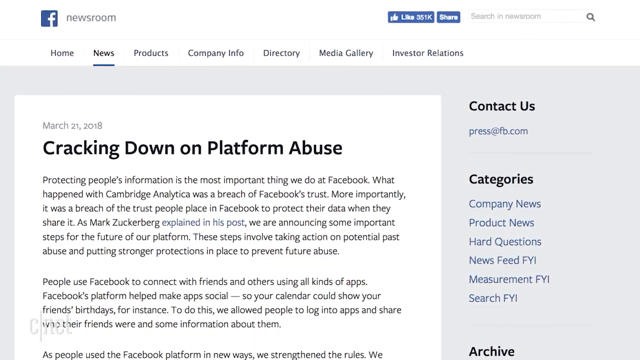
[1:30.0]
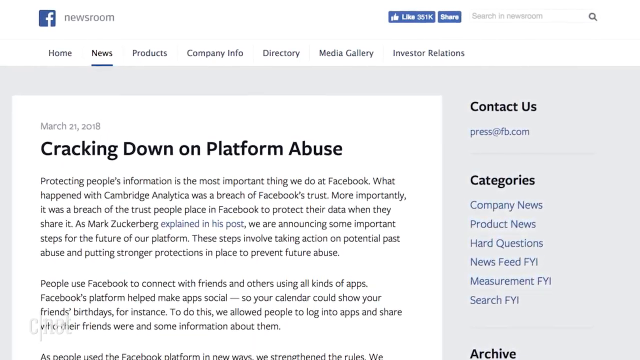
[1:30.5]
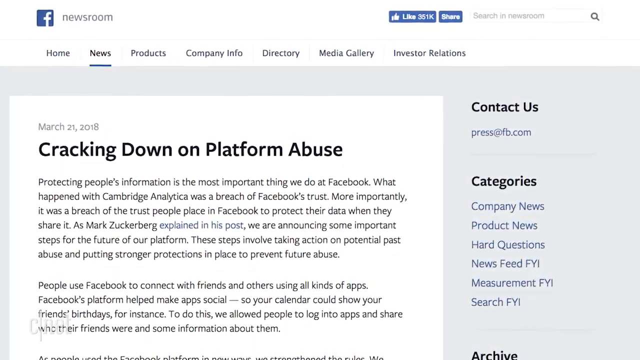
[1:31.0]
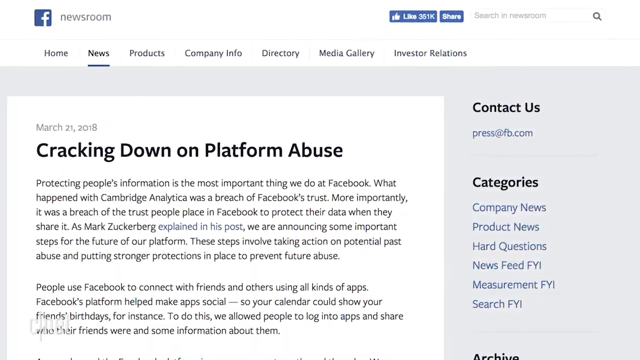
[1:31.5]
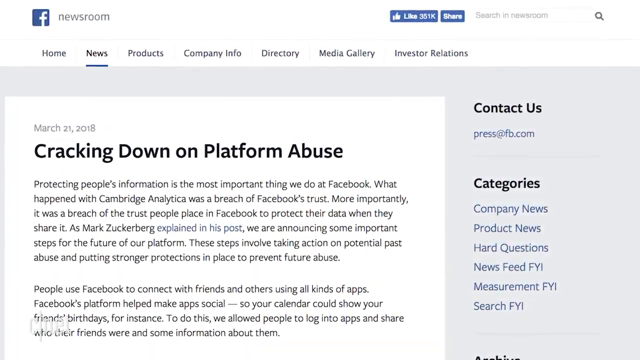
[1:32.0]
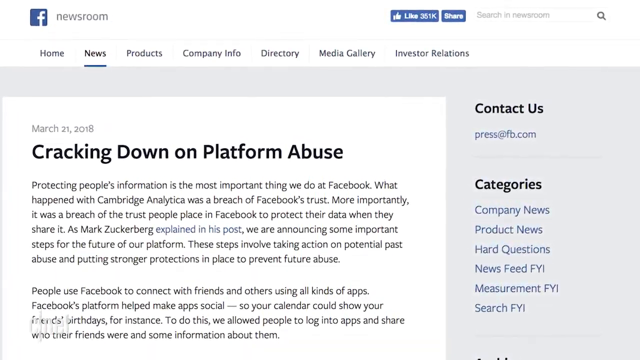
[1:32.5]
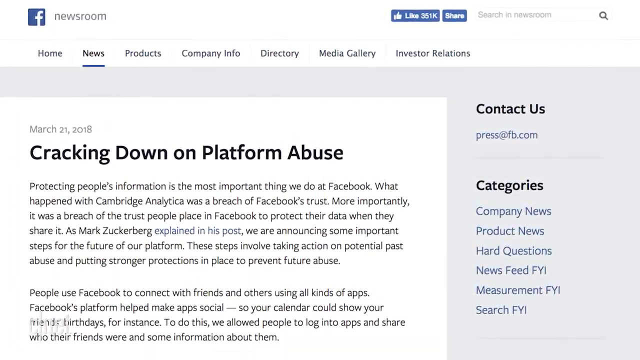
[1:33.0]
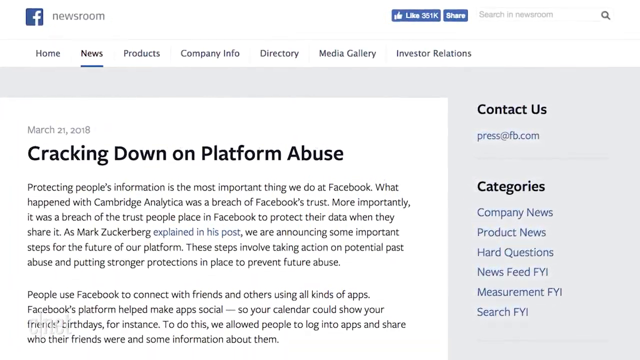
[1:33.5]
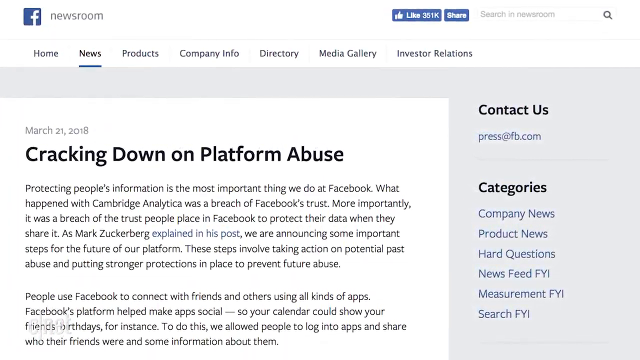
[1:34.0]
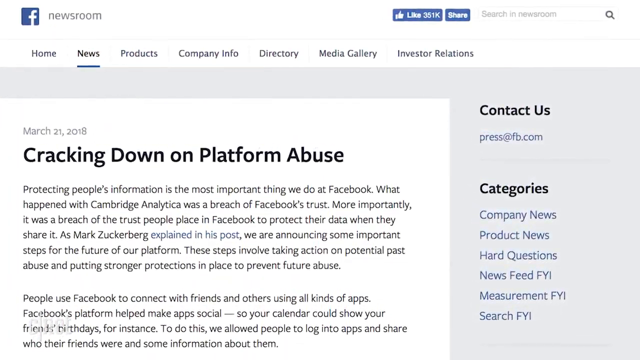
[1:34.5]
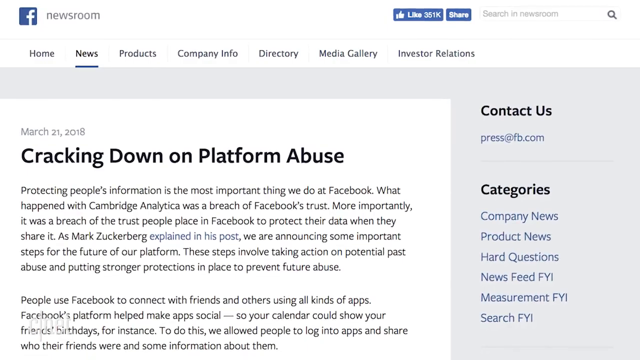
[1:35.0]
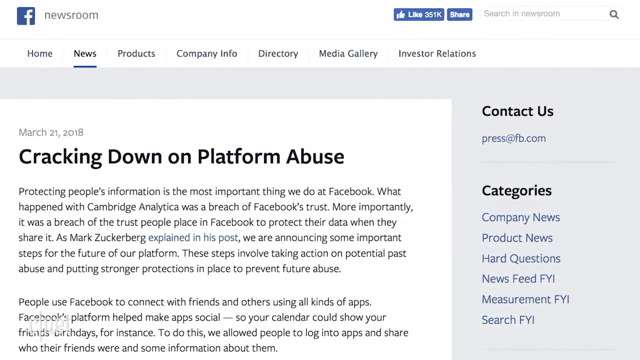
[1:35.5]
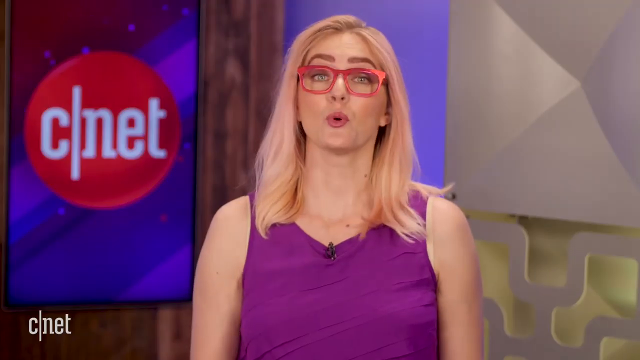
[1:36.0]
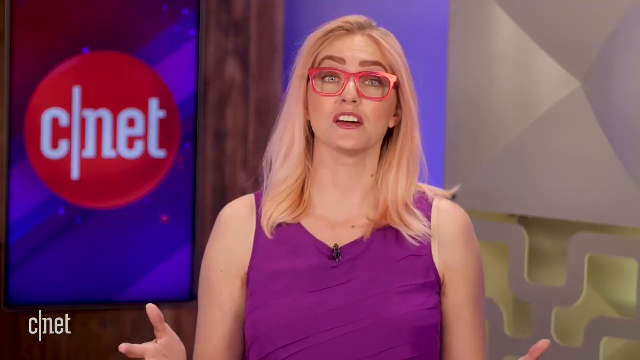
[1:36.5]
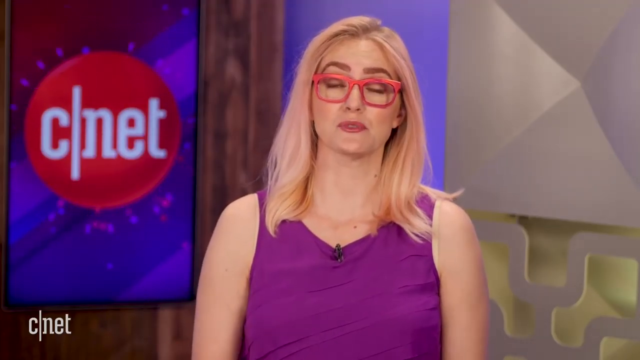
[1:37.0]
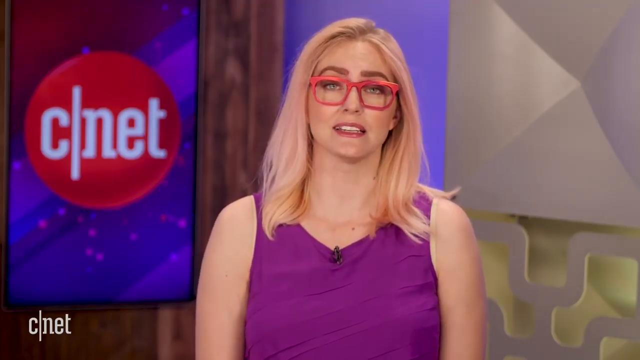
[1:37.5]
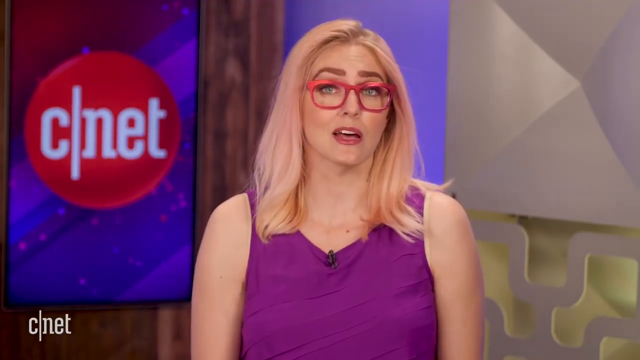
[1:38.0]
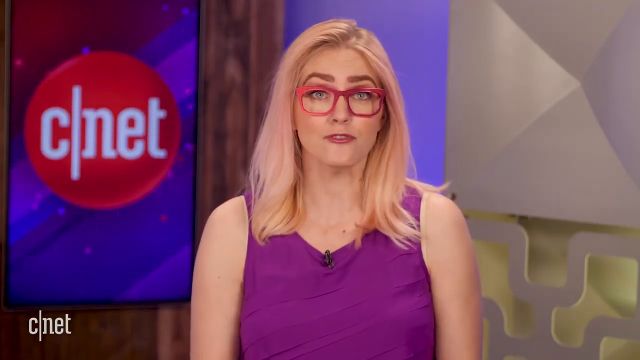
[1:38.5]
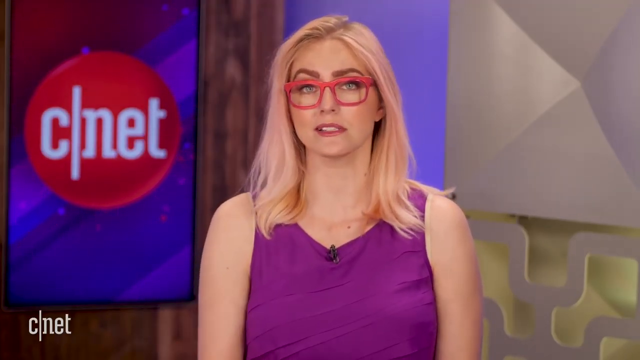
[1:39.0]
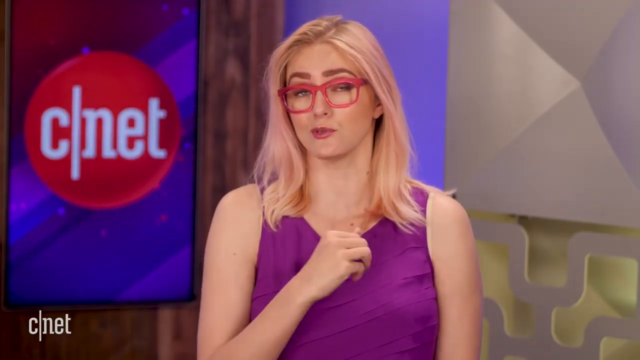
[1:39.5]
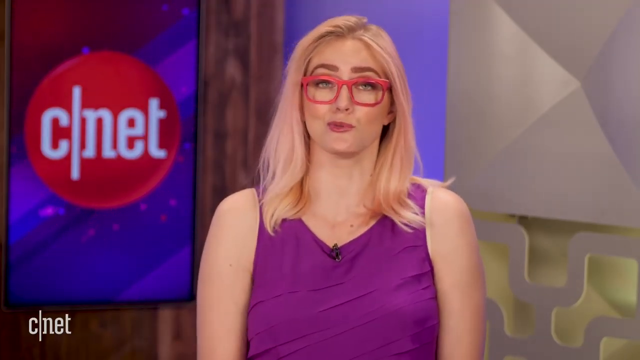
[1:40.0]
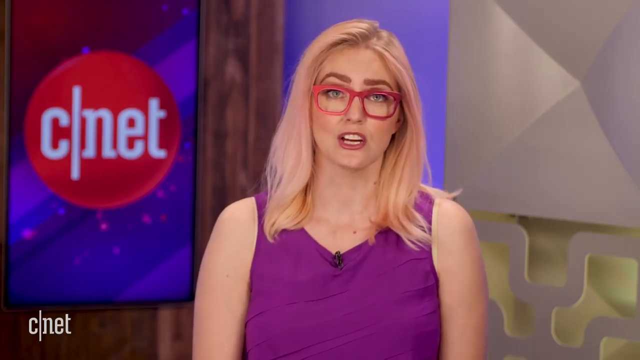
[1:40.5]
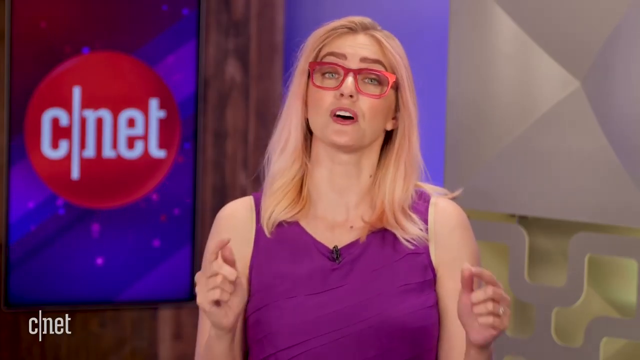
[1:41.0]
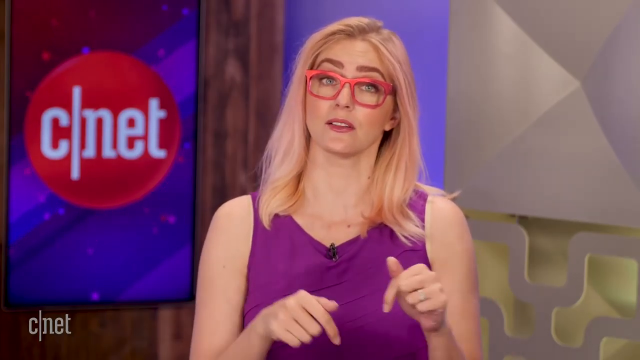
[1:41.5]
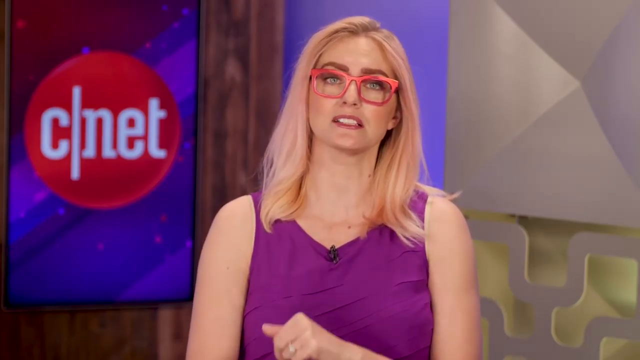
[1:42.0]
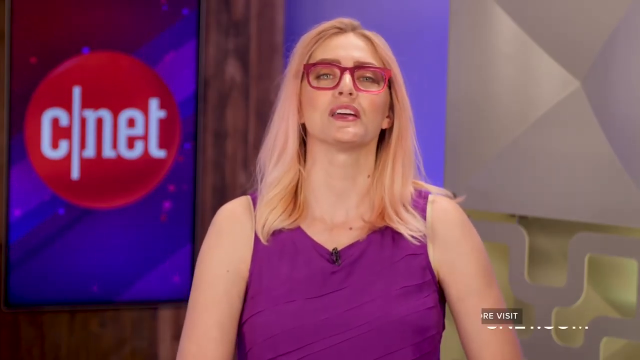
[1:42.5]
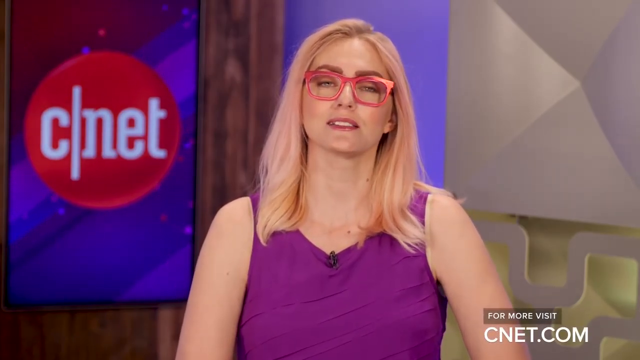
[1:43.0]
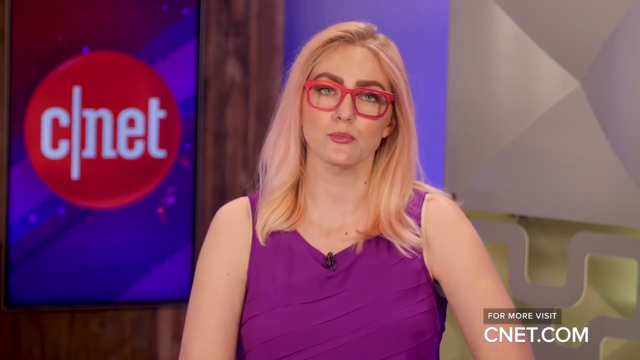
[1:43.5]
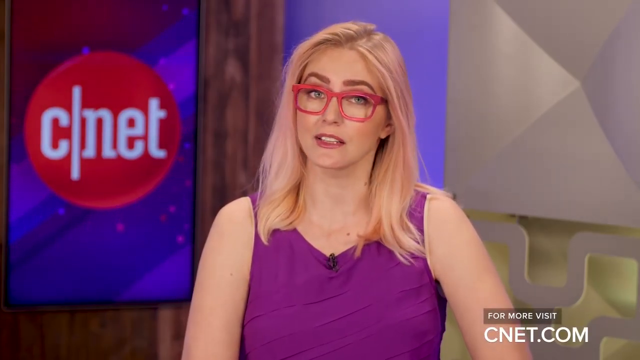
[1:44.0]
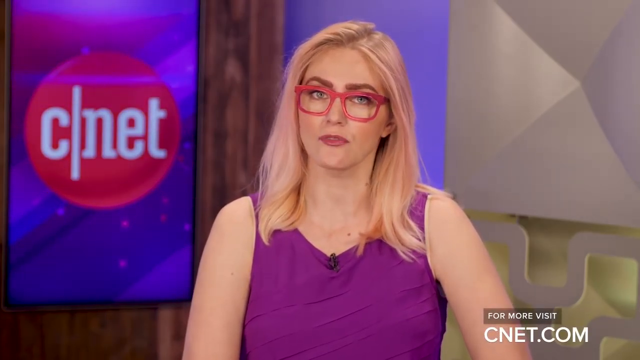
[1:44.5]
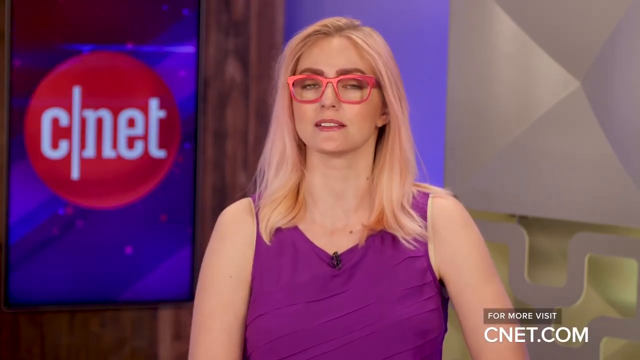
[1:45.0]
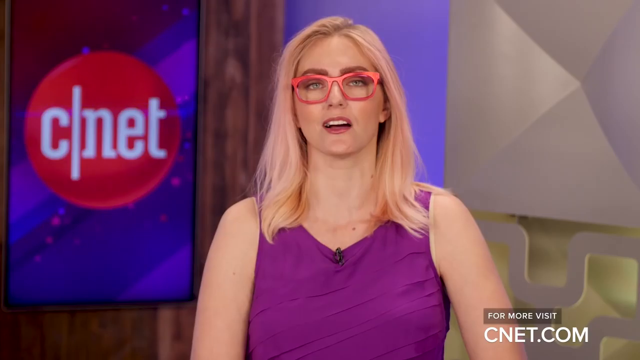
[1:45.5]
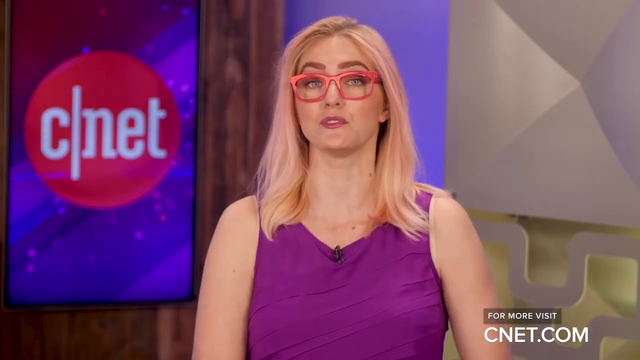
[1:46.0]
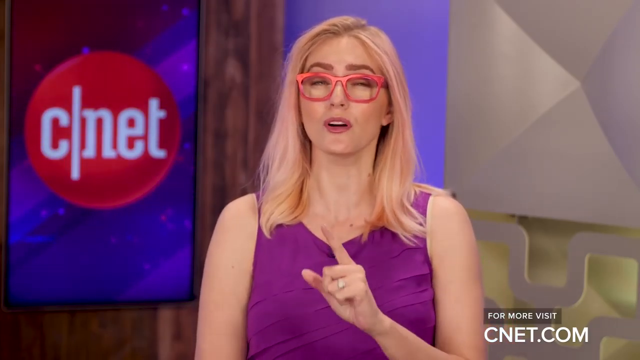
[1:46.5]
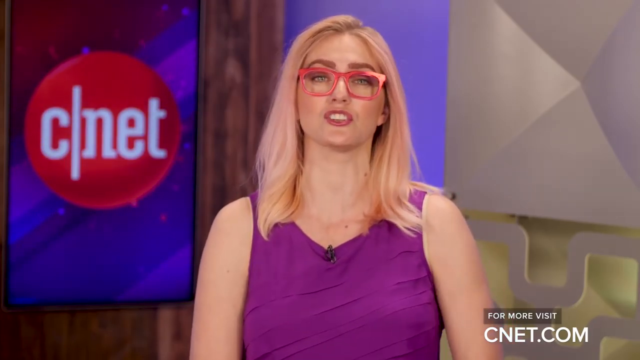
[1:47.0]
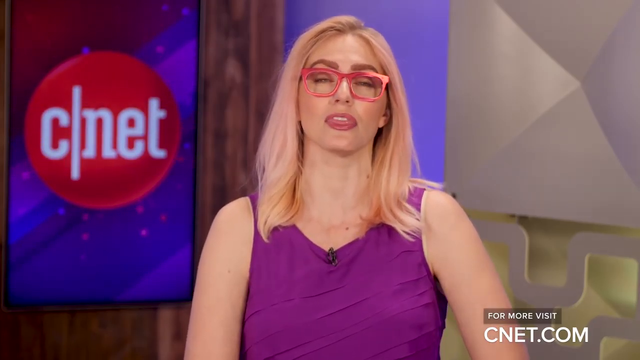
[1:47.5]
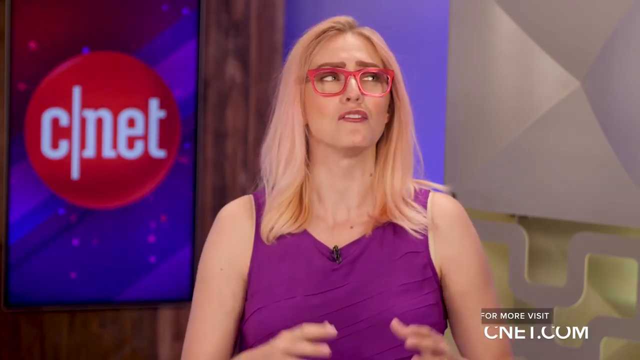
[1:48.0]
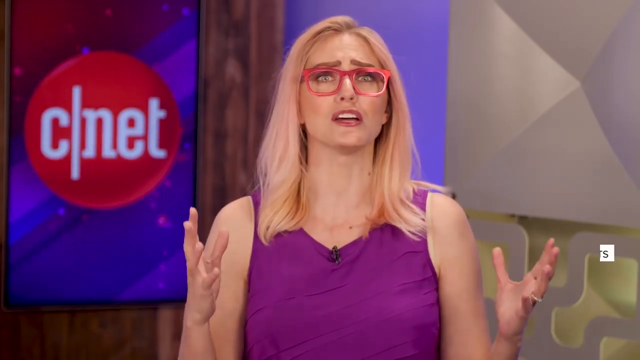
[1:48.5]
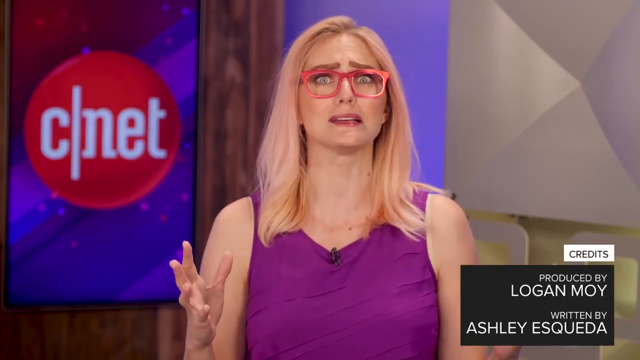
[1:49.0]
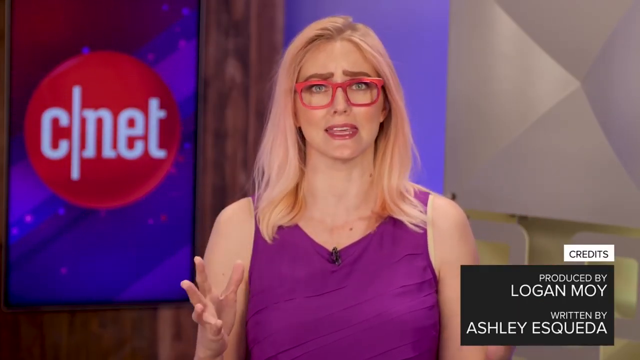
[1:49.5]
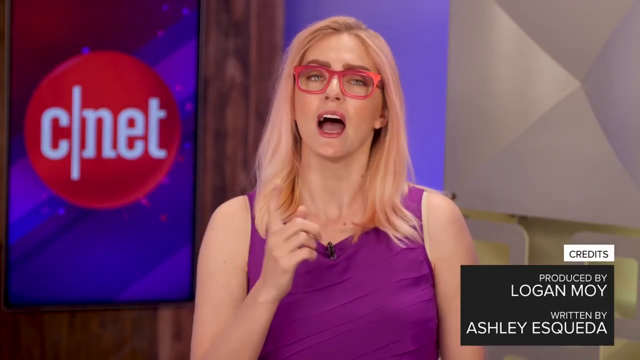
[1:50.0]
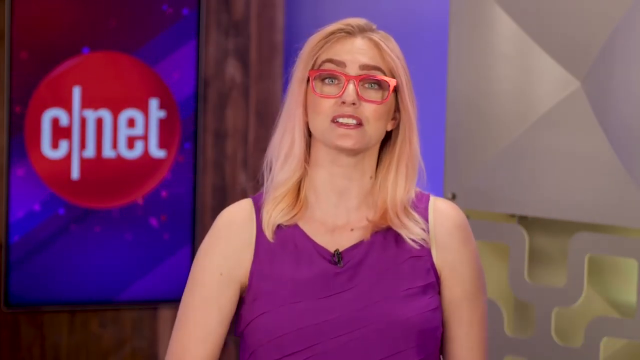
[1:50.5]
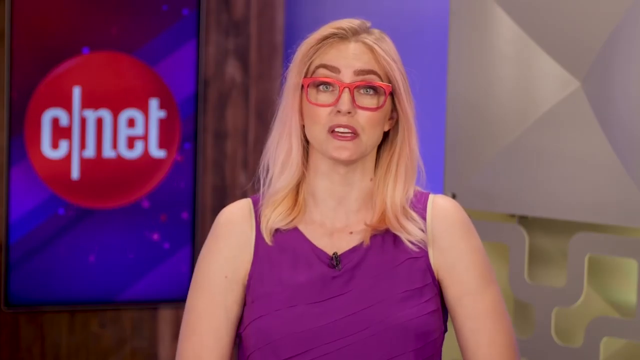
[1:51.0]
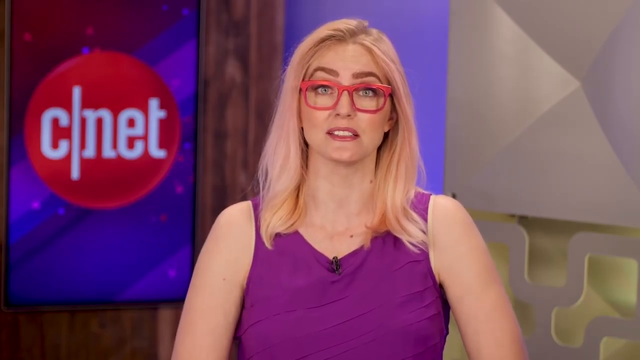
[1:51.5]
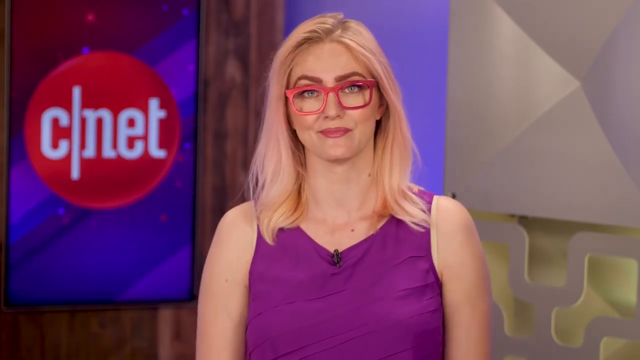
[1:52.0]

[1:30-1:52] The video begins with "cracking down on platform abuse" and text starting "protecting people's information is the most." It switches to the woman sitting in front of a probably fake background that shows a C, a line, and "net," along with "cnet.com" for more info; text mentioning someone named Logan also appears. Zuckerberg's post is shown again, apparently the same one as earlier, marked "one hour ago" and "Menlo Park," followed by the phone showing Cambridge Analytica. Someone scrolls with their left index finger on a phone resting on a desk, and "Facebook" is written on a big window, probably at Facebook headquarters. "CNET" appears in the bottom left of the screen. Someone scrolls on the red phone on their desk, then the woman in the purple dress is talking. Someone holds a phone in front of them against a muted background where a monitor screen is kind of visible, scrolling through it, and then the red phone is back on the desk. The video closes on the same kind of screen showing different things that can be done in the app.